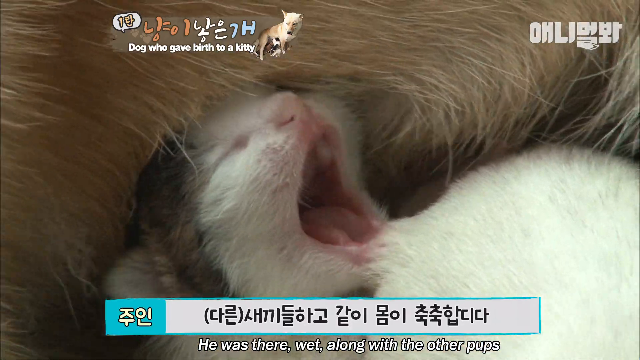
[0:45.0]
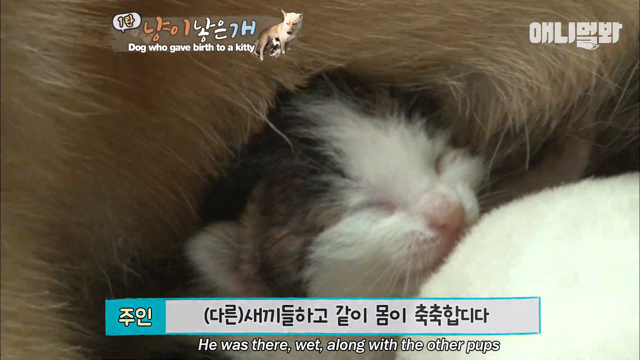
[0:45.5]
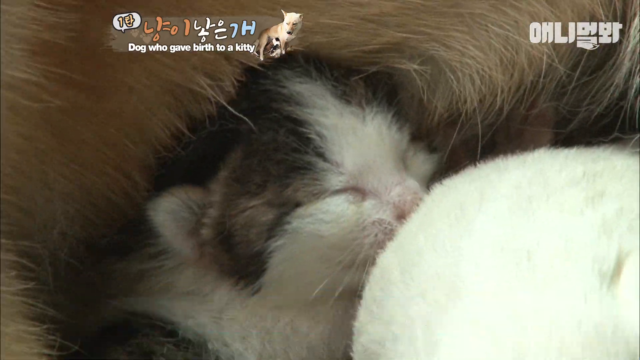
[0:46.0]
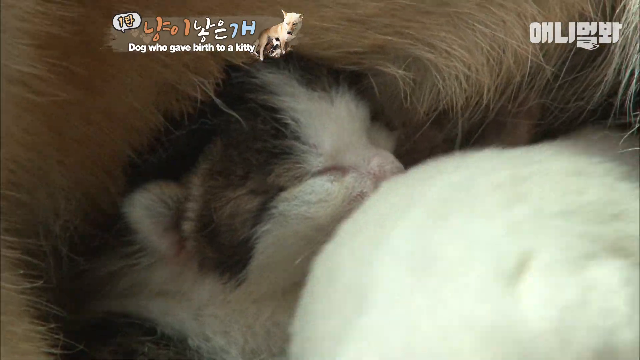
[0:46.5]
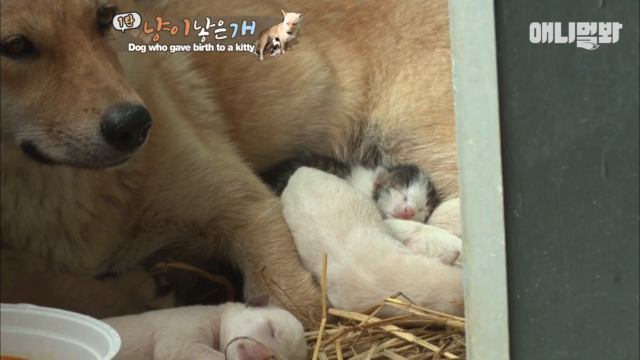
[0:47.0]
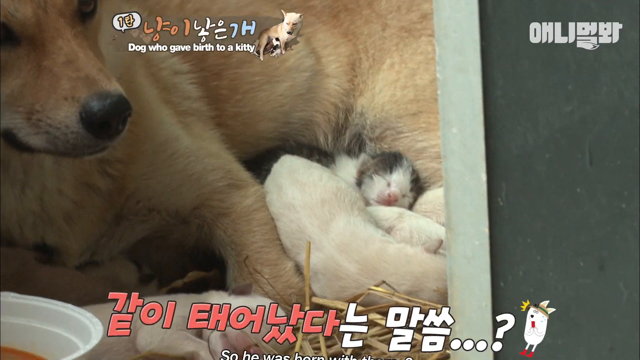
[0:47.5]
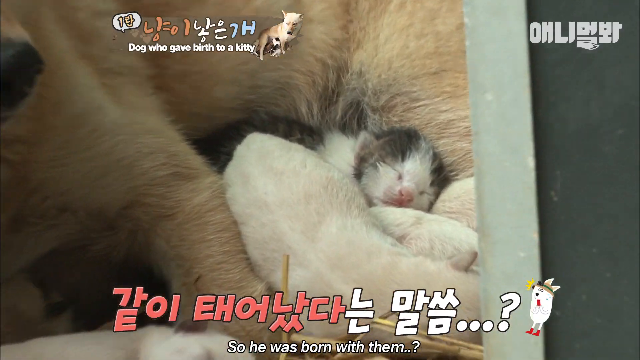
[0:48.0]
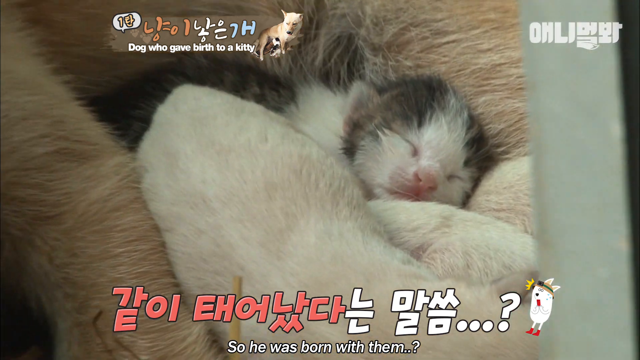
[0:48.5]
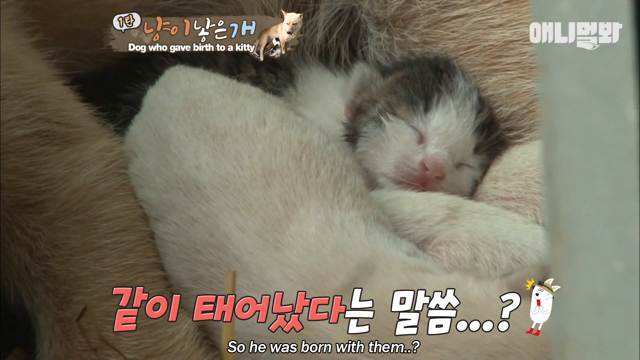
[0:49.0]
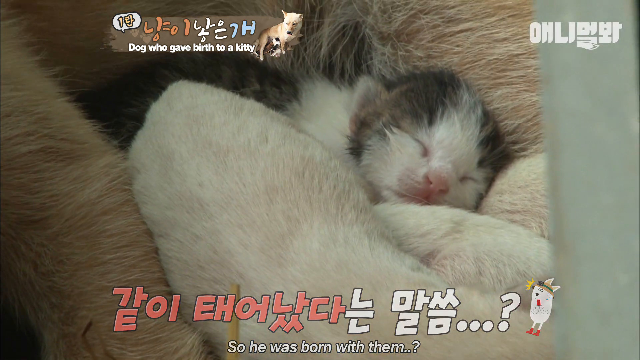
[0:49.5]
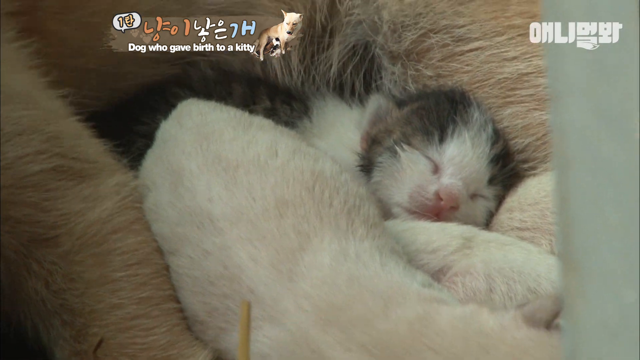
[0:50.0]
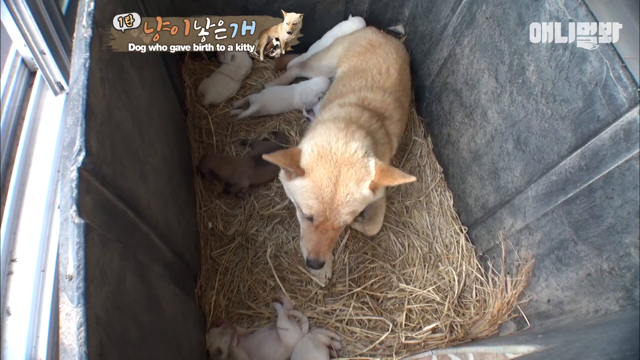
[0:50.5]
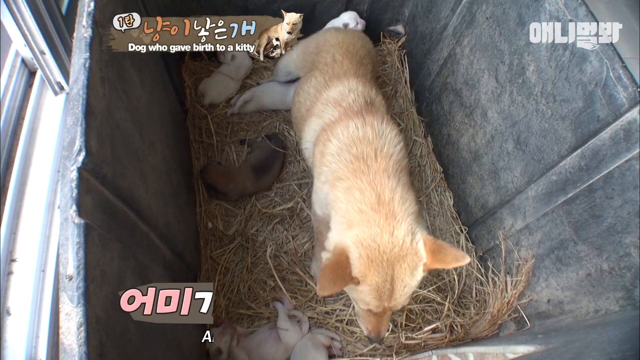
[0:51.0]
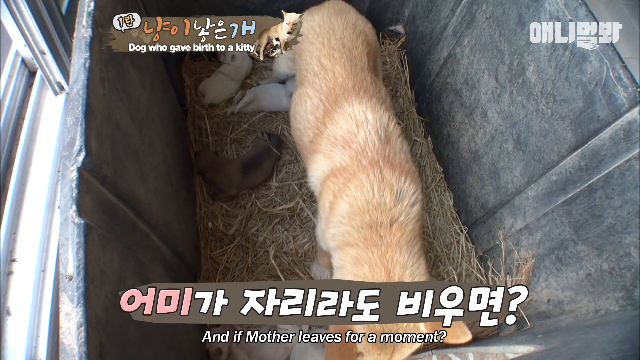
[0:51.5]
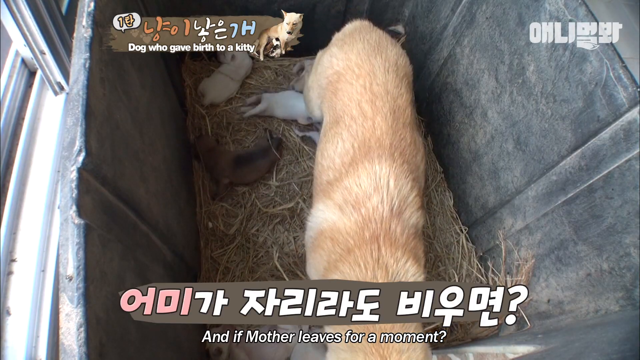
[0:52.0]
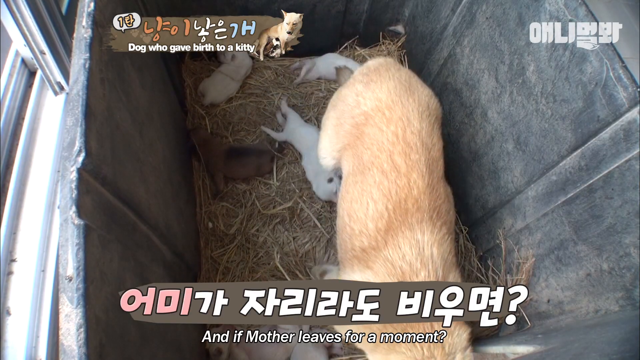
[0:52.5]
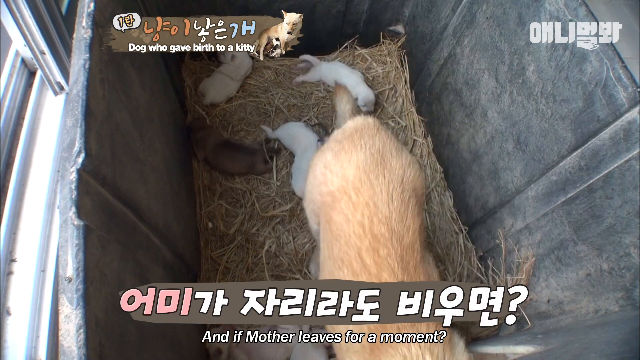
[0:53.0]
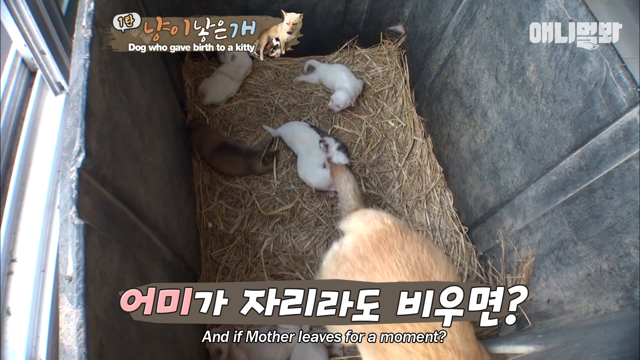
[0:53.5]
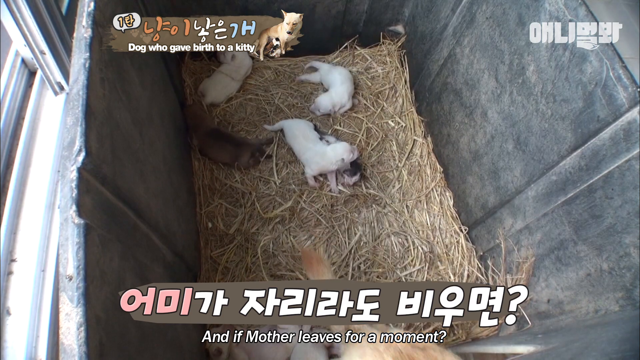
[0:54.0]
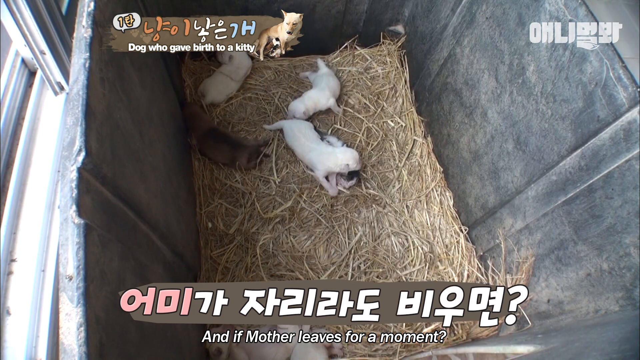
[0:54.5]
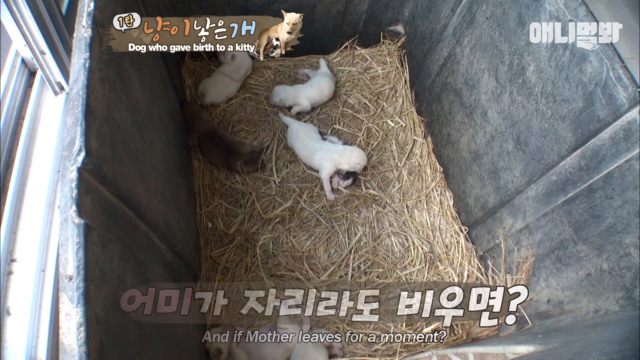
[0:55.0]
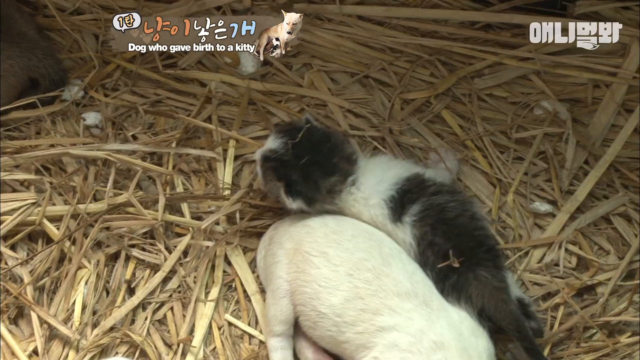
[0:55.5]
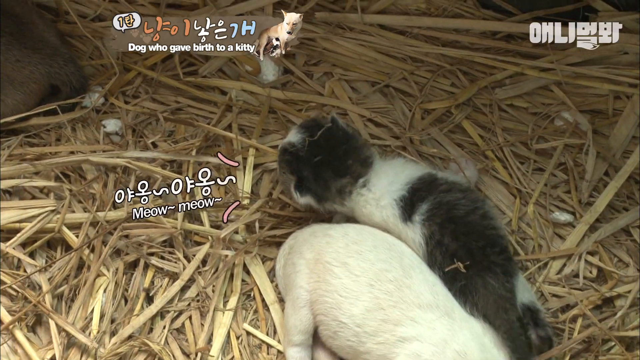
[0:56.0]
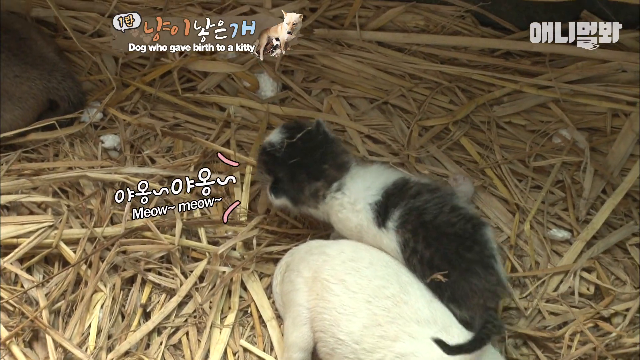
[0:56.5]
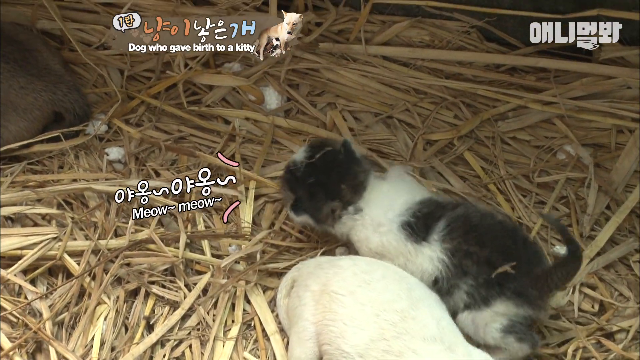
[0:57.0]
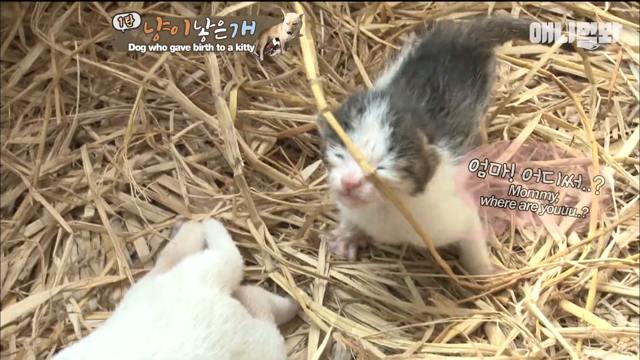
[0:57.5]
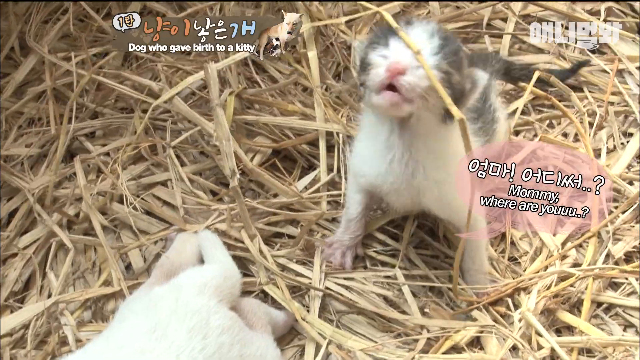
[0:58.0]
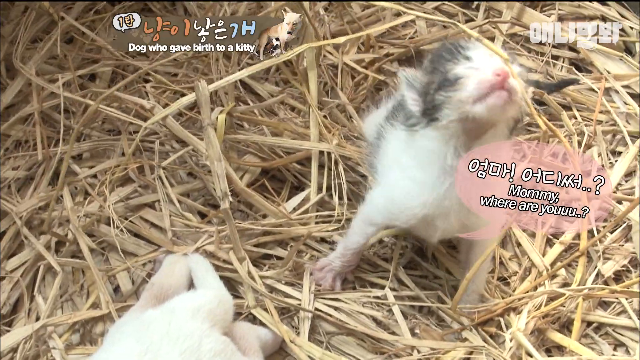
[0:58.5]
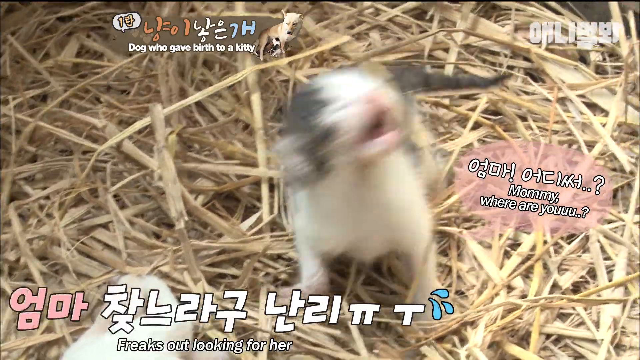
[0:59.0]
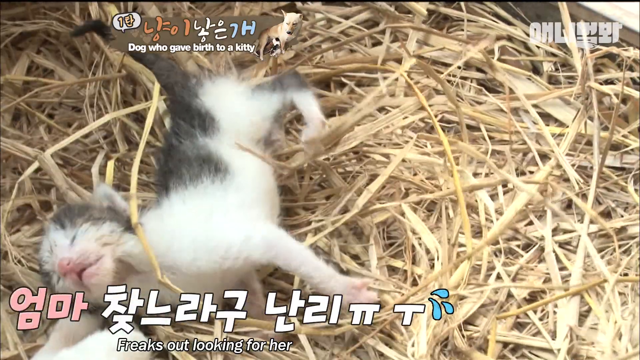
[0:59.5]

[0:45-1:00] Some very young puppies and a kitten are with an adult dog that sits with them in an enclosure of some sort with straw bedding. The puppies, the kitten and the adult dog move around. At one point the kitten sort of stretches and then falls over as it stands up. Chinese and English subtitles appear throughout; the English subtitles say that the kitten was born with the puppies. The camera angle changes several times to show different views of the setting.